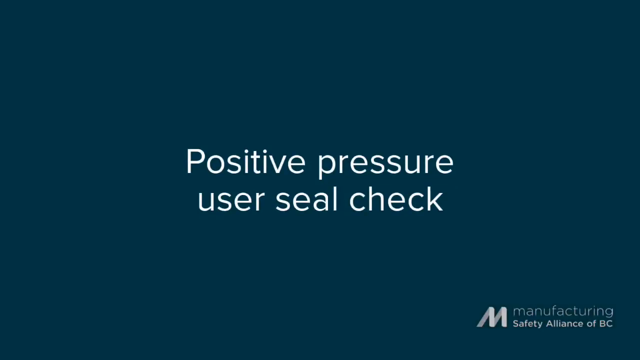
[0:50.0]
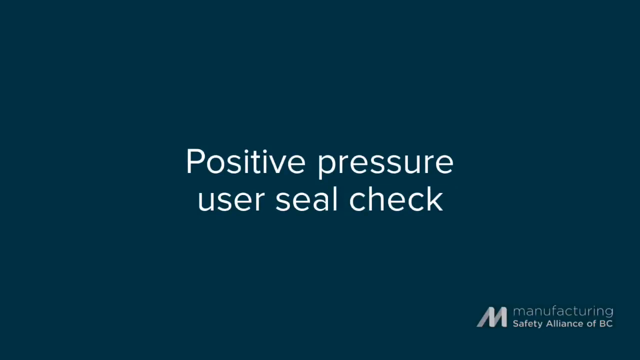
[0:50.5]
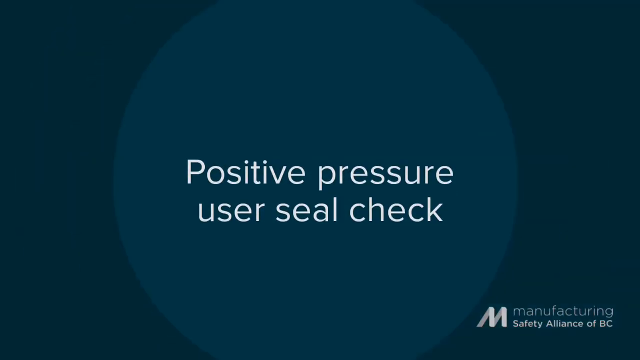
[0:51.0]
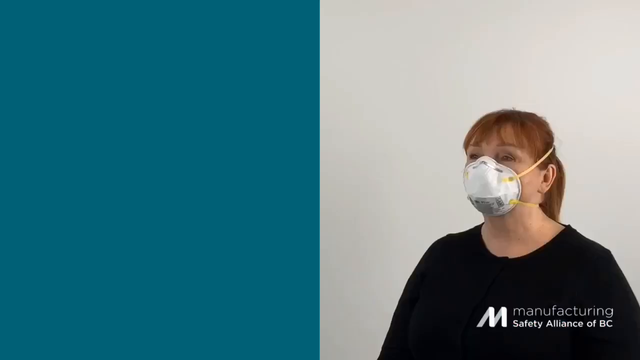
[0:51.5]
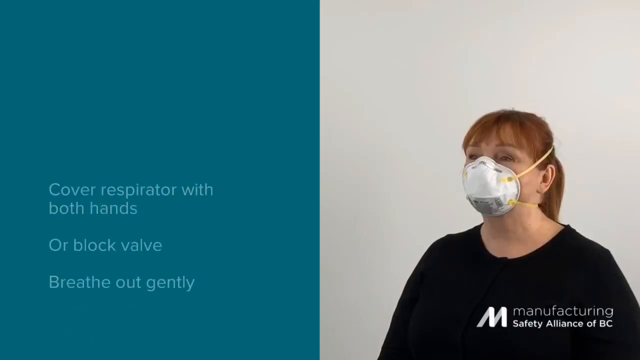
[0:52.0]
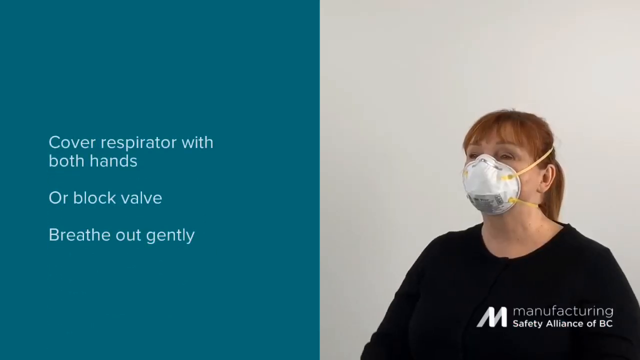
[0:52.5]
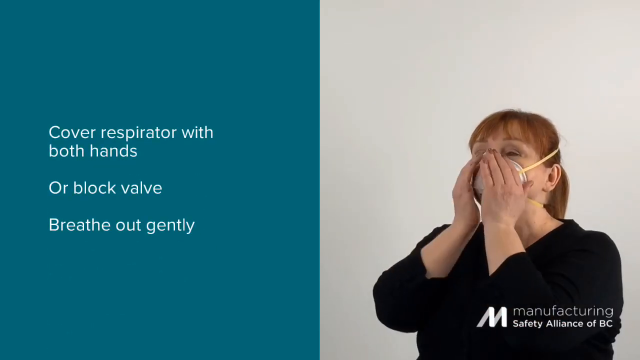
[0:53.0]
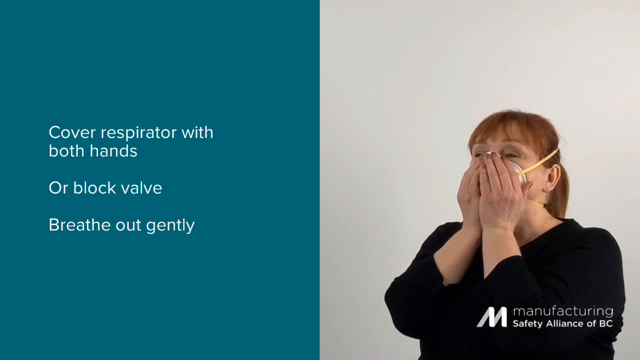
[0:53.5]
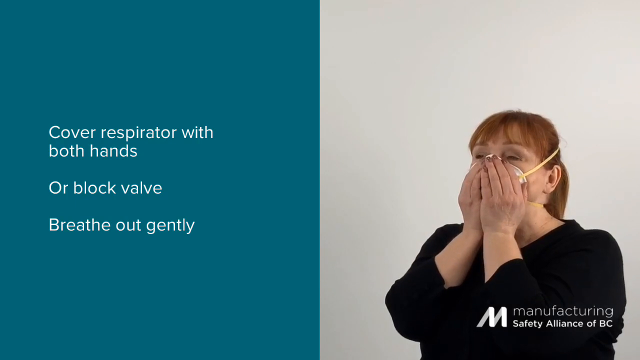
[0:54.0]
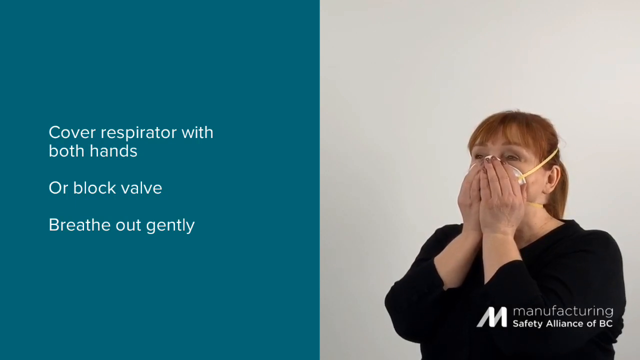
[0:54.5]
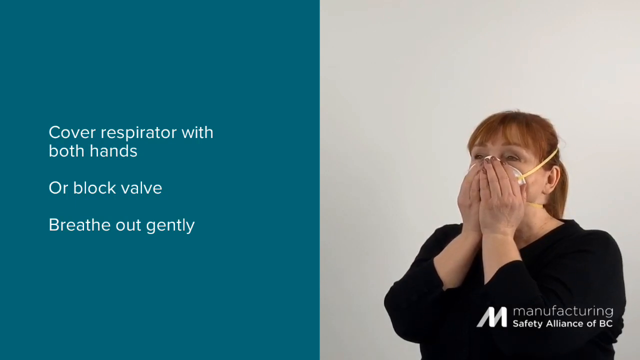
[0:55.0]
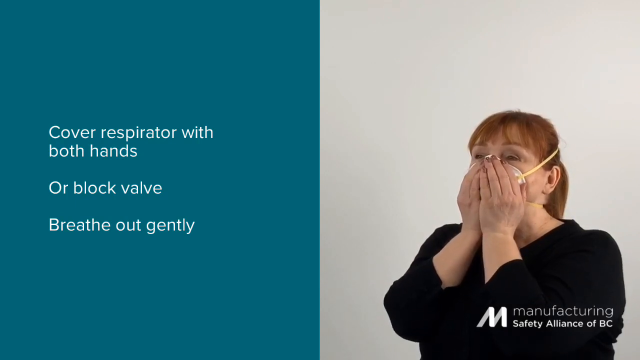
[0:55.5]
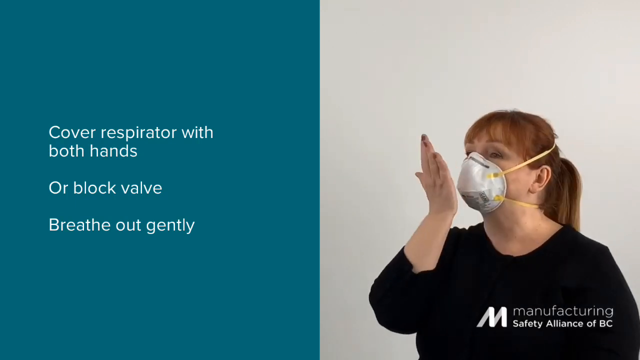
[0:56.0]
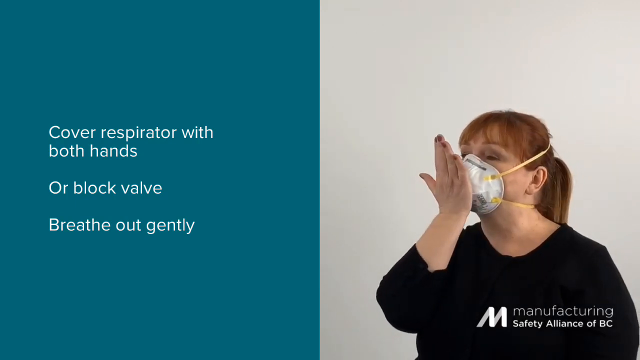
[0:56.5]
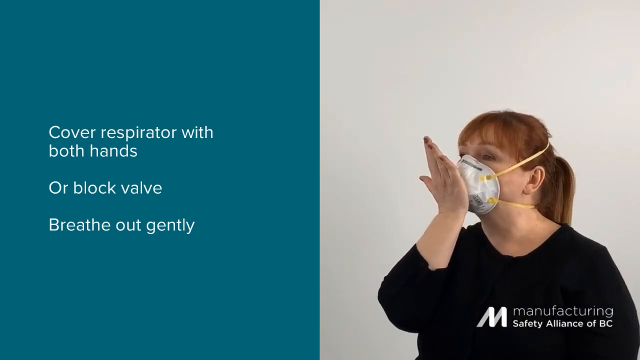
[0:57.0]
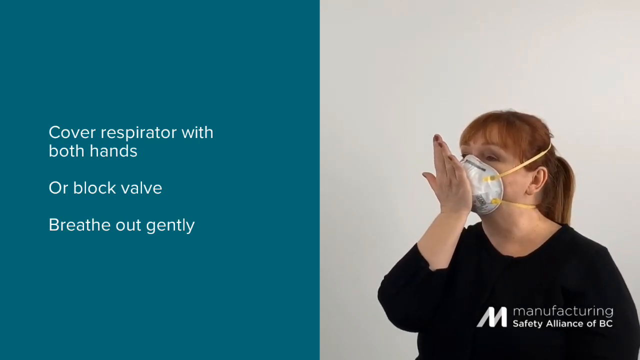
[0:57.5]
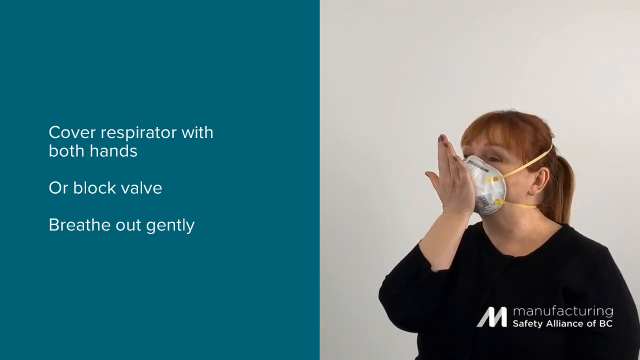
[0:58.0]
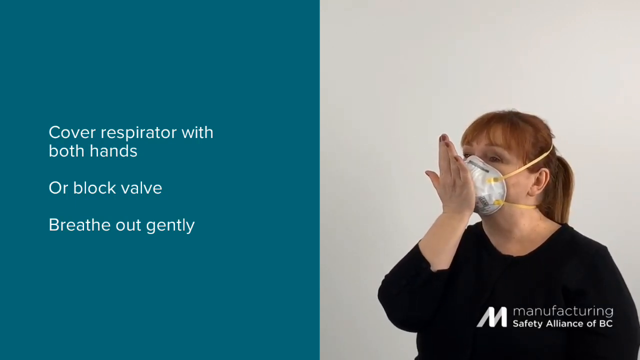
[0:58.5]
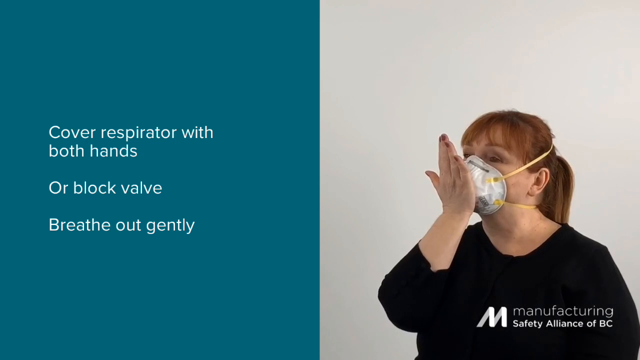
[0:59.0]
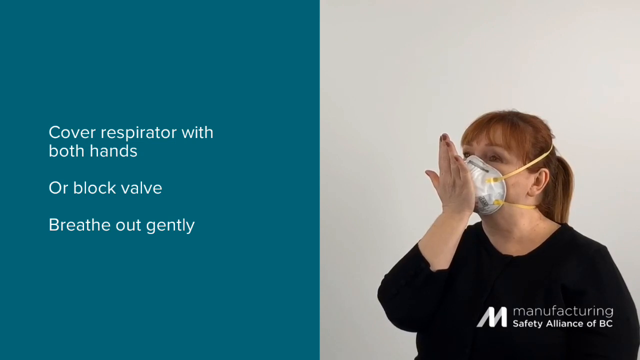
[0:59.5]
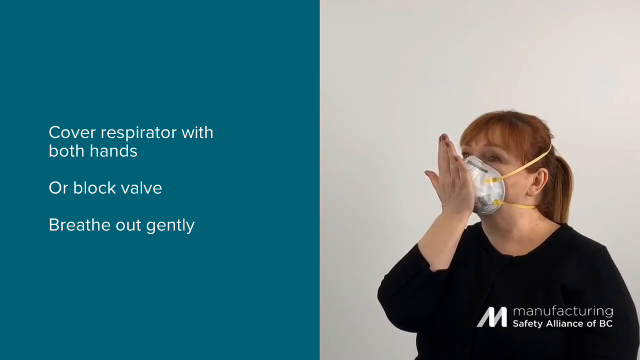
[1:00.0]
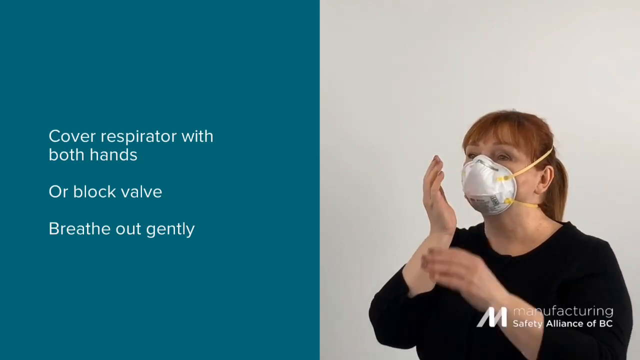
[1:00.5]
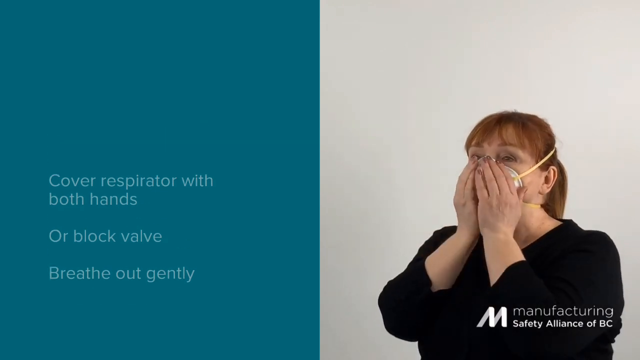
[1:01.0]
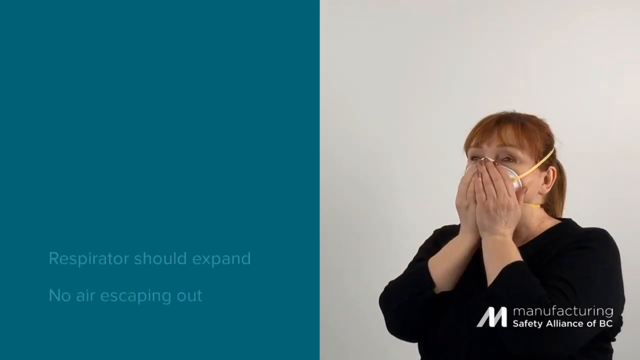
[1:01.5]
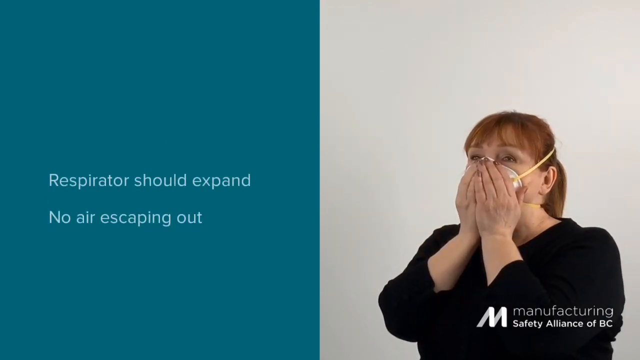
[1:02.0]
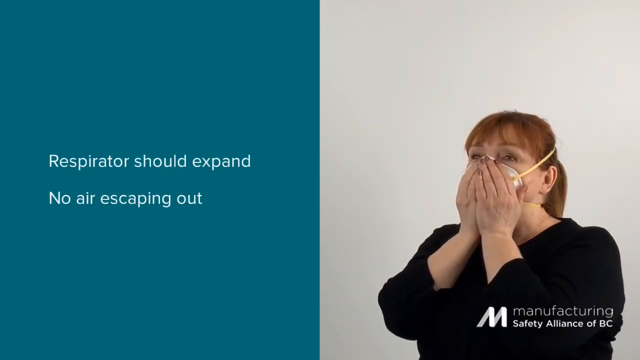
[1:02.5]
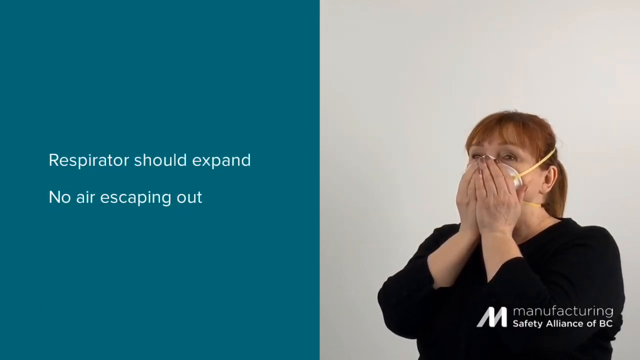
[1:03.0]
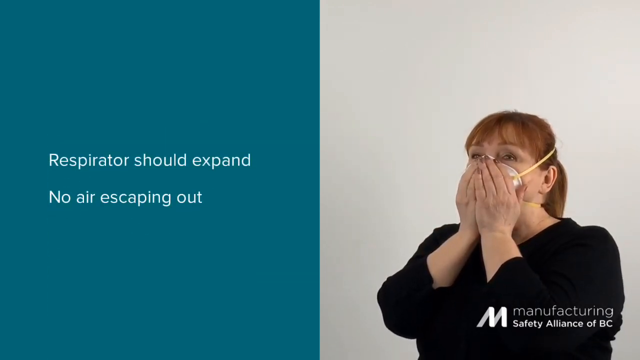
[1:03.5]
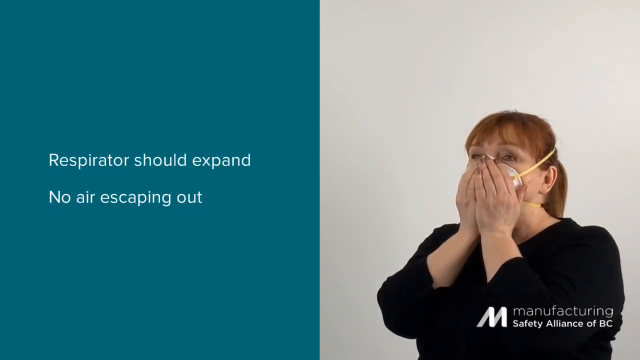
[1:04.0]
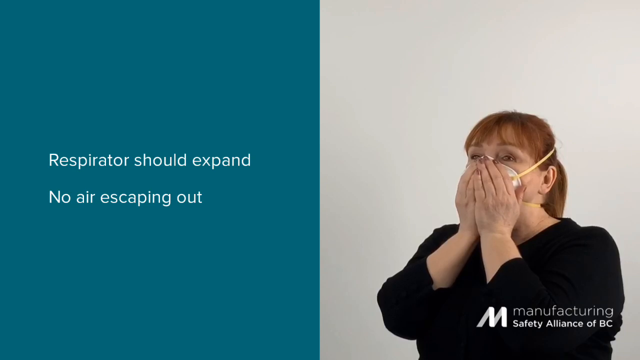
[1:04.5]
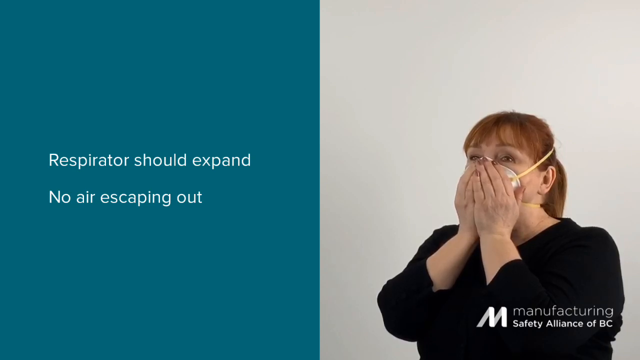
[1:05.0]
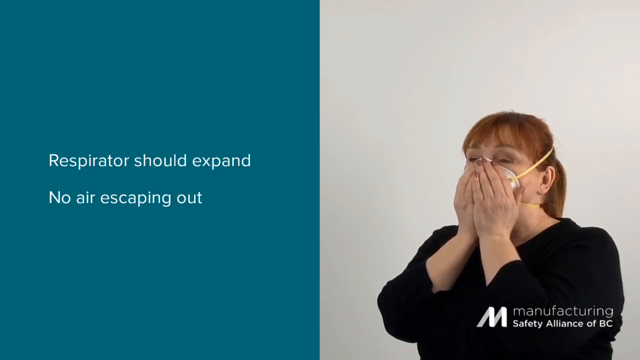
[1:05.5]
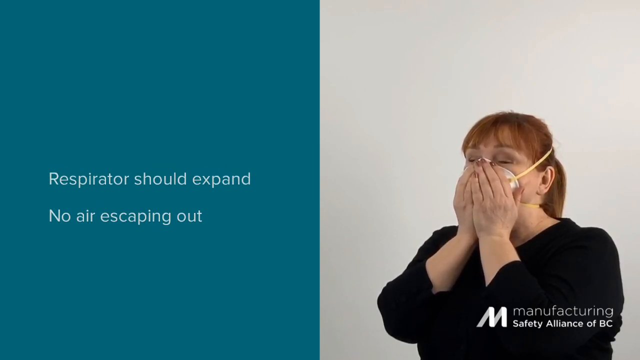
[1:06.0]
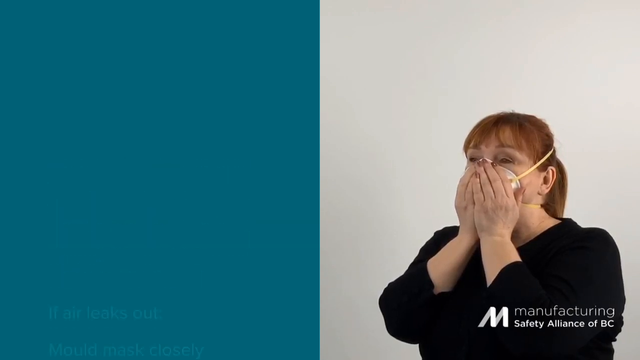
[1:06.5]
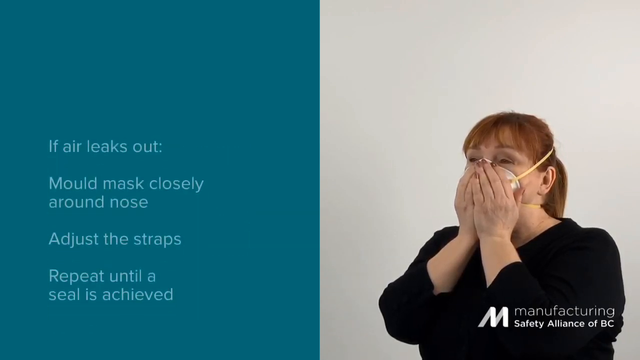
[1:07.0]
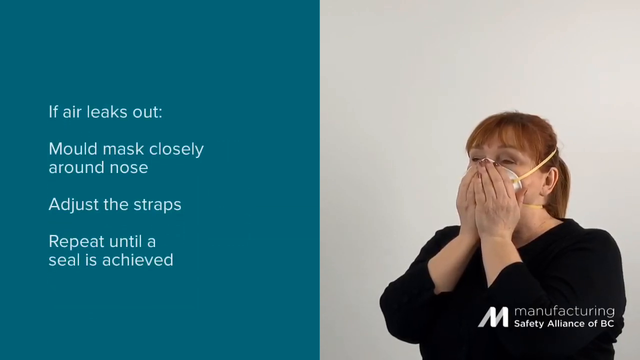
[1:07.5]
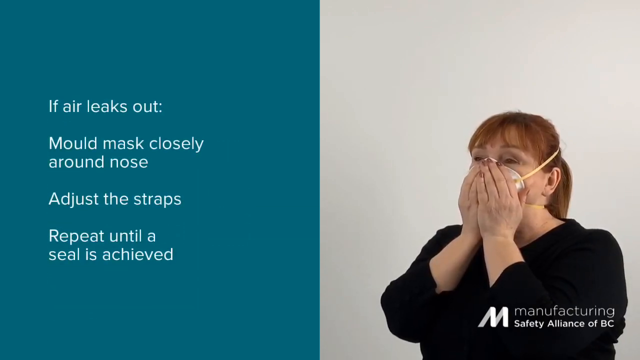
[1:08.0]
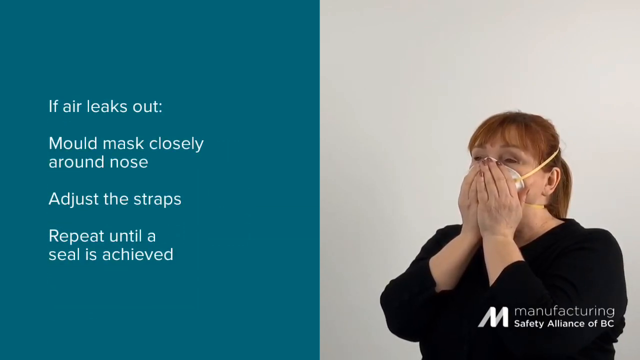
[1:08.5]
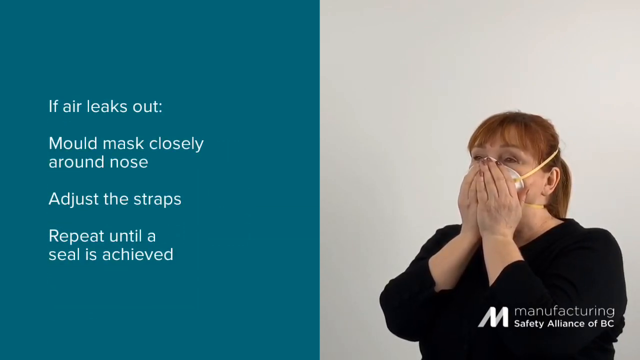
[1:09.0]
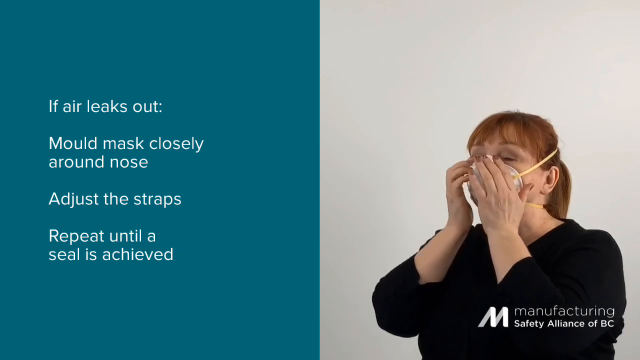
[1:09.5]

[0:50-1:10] The text "positive pressure user seal check" is shown on a very dark background. The video then moves to a split screen with live video of the instructor standing against a neutral light-colored background, demonstrating how to perform the positive pressure test. On the left, on a green background, are the words "cover respirator with both hands or block valve, breathe out gently." The instructor puts both hands in front of the mask as she breathes out gently. She also places the palm of her right hand on the front of the mask to show where a valve would be blocked; her mask has no valve, so she is only showing the position. She again puts both hands on the mask as though covering it. The text on the left changes to "respirator should expand, no air escaping out," and additional text appears: "if air leaks out, mold mask closely around nose, adjust straps, repeat until a seal is achieved." Finally, the female instructor briefly adjusts the nose-clip area of the N95 mask she is wearing.